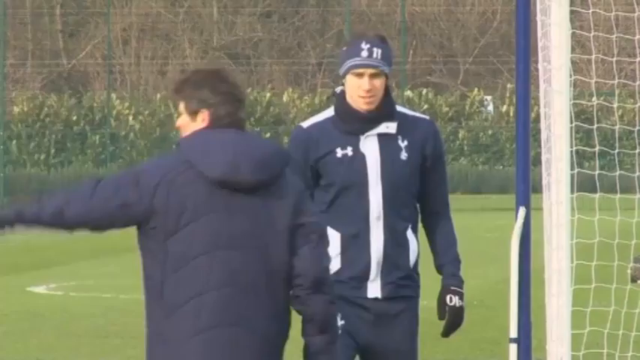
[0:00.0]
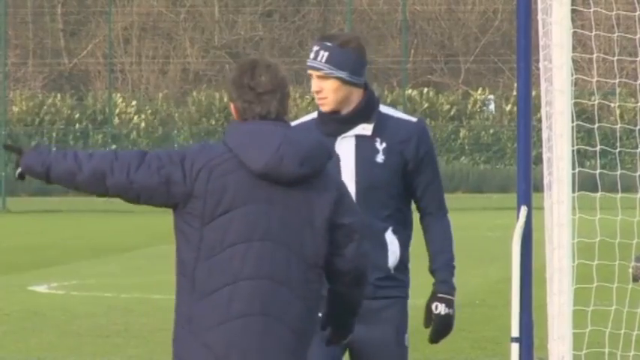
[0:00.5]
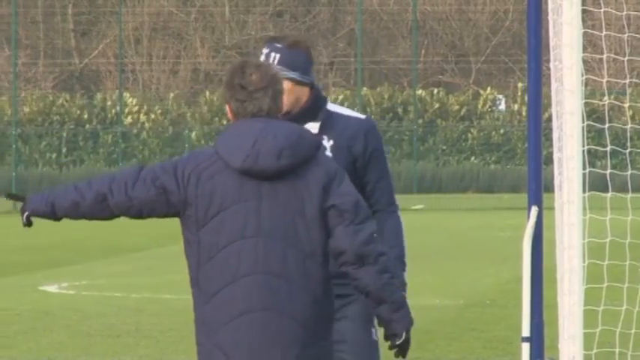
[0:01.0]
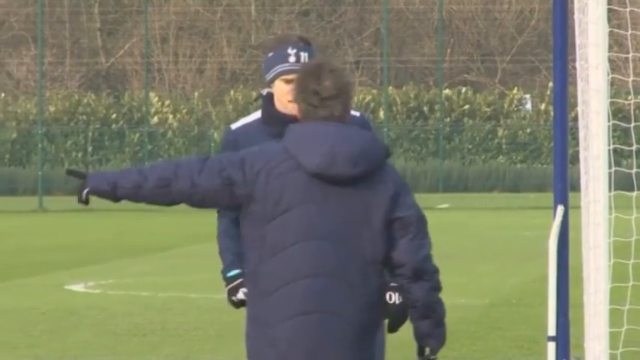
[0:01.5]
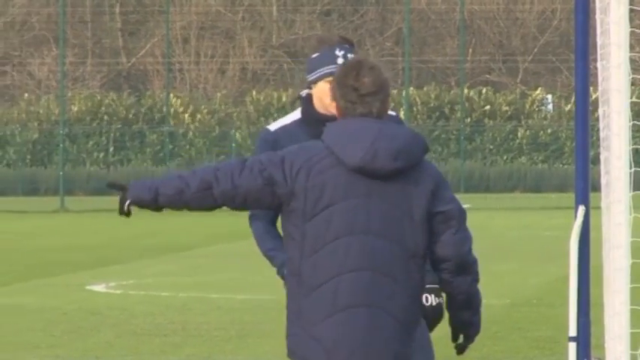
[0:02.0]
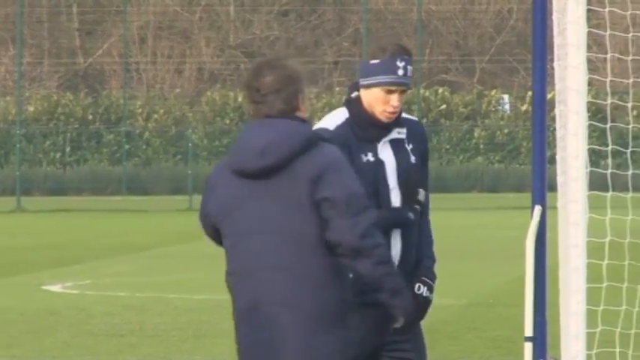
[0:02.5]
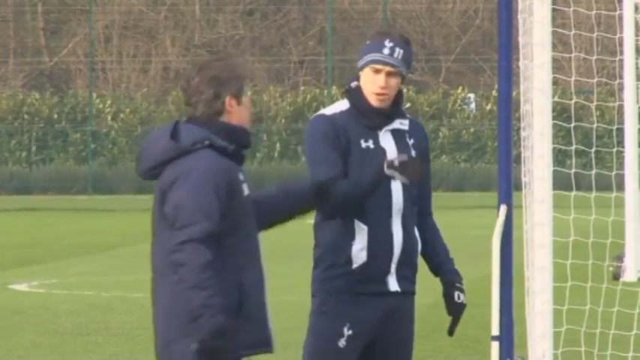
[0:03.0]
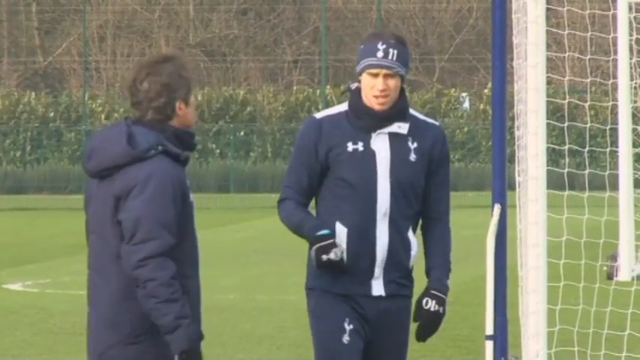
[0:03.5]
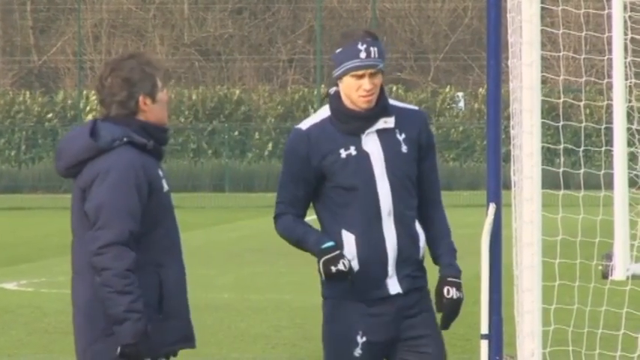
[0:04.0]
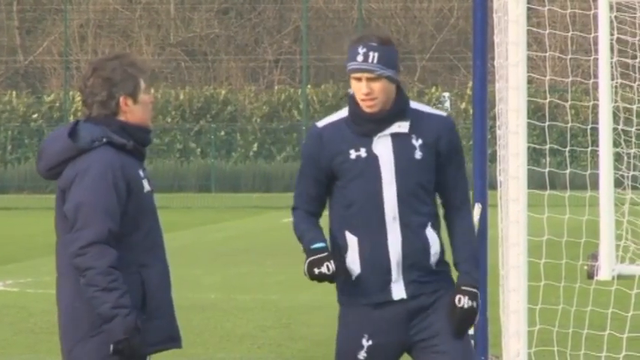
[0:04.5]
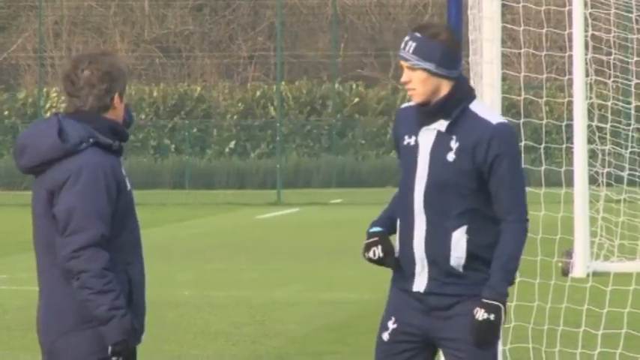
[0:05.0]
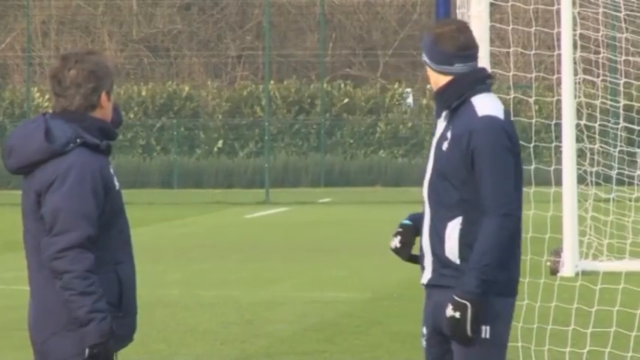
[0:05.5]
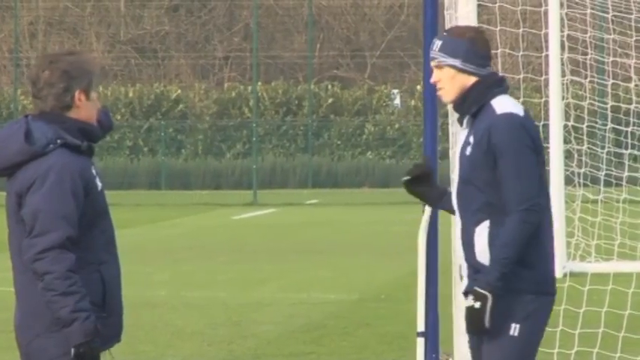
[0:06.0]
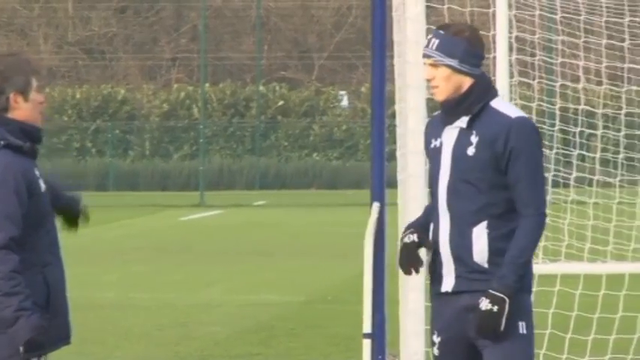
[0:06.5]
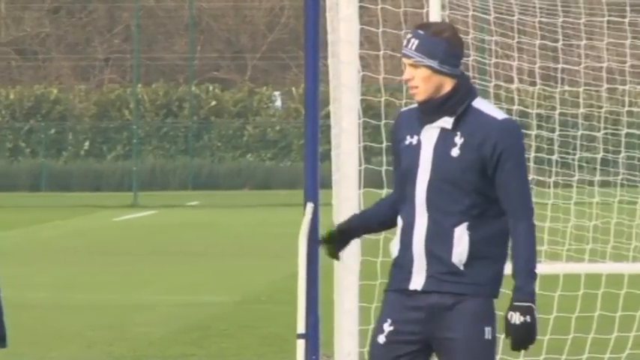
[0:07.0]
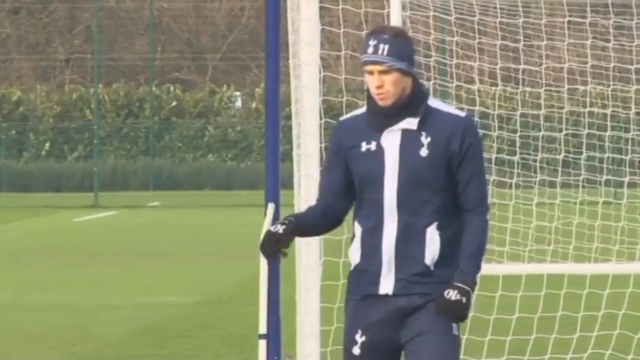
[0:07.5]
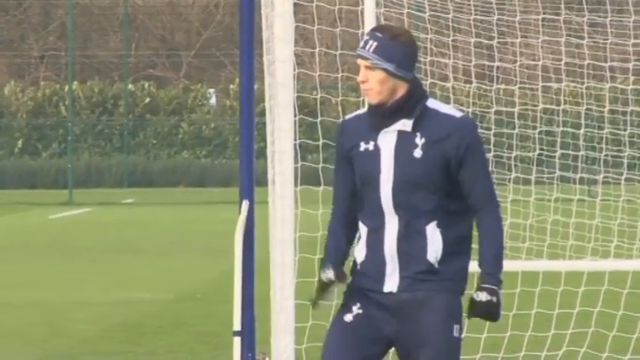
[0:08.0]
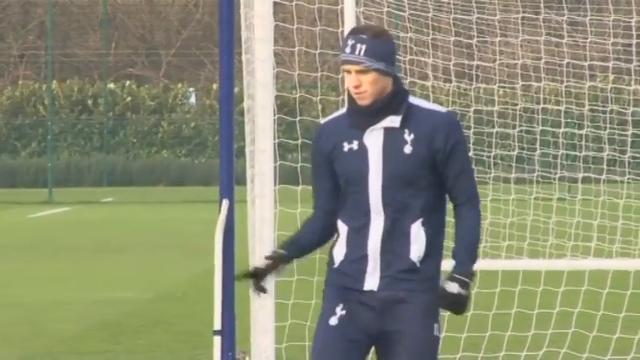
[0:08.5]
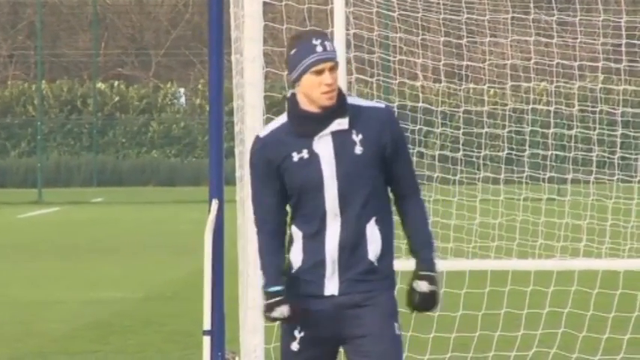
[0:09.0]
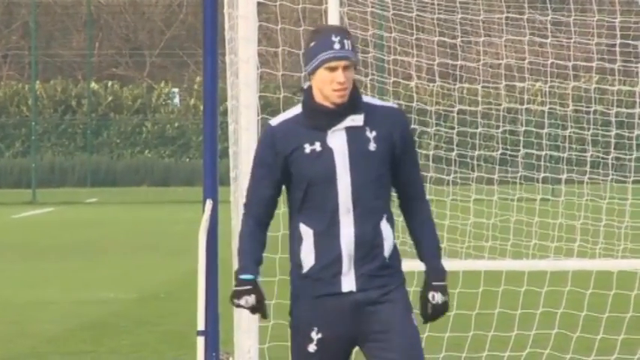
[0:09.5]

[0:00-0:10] On a football training pitch, two men in winter sports clothing speak to each other. One is Gareth Bale, wearing a dark blue and white long-sleeve Tottenham Hotspur jacket, a headband and gloves; he faces the camera without looking at it. In the centre of the screen, the other man, in a jacket with his back to the camera, points to the left of the screen, showing Bale something, then indicates the other side of the pitch. Bale answers, moving his fingers and his head around. Then he points to his thigh, says something about it, and moves slowly to the right side of the screen, closer to the goalposts. They are in front of the goal, and the goal net is visible on screen. The grass is green and there are woods all around. The scene is outdoors.